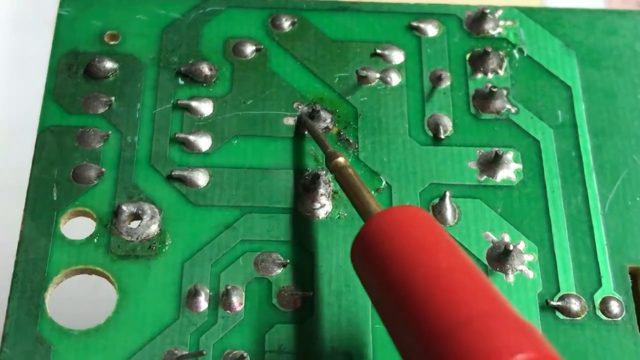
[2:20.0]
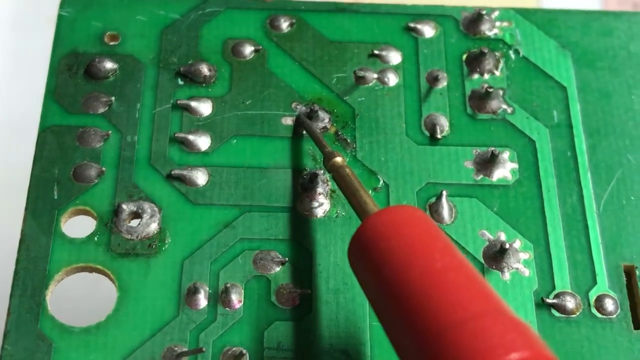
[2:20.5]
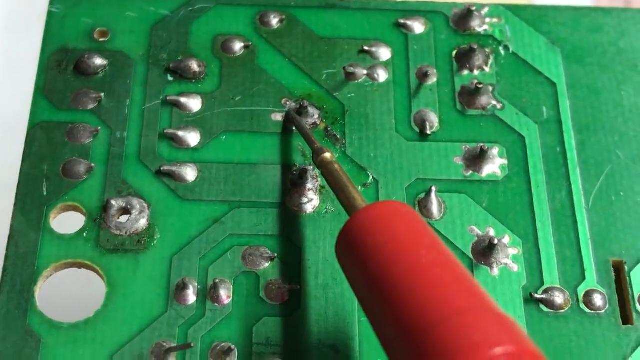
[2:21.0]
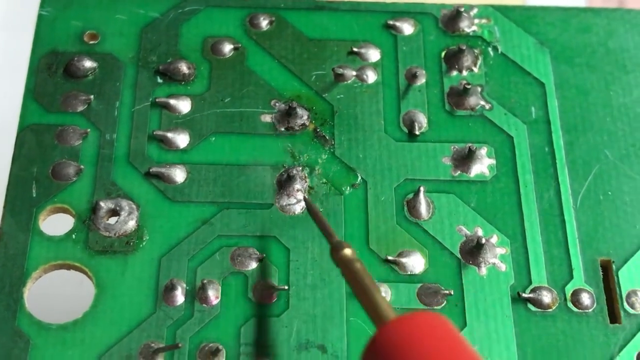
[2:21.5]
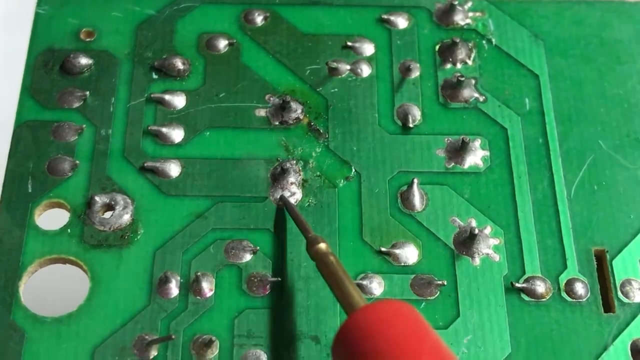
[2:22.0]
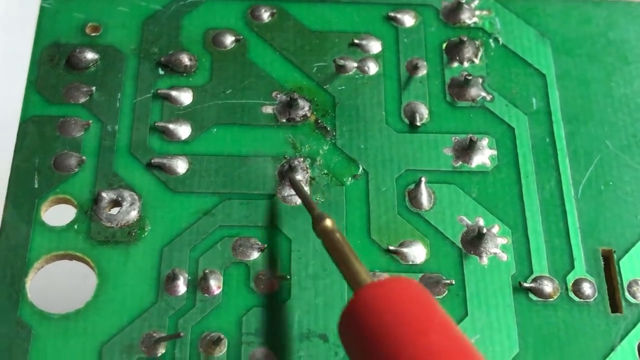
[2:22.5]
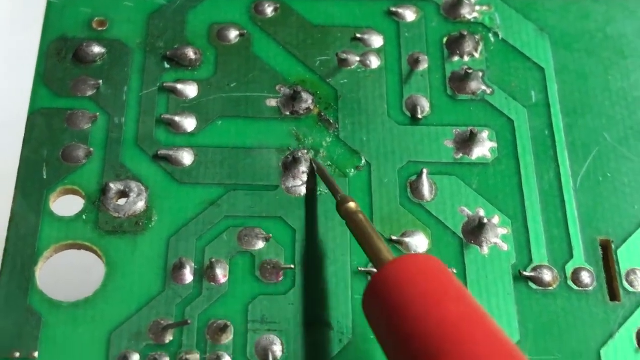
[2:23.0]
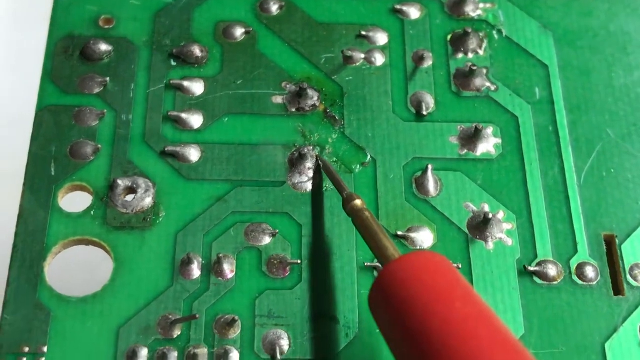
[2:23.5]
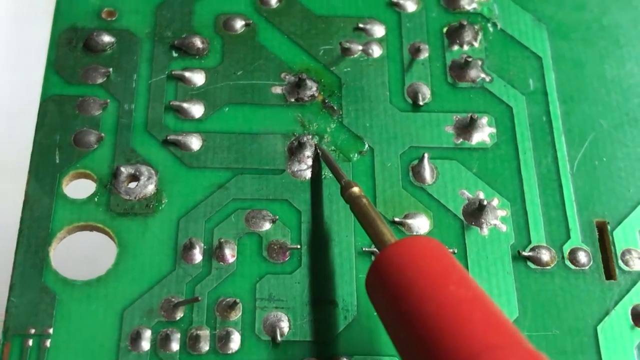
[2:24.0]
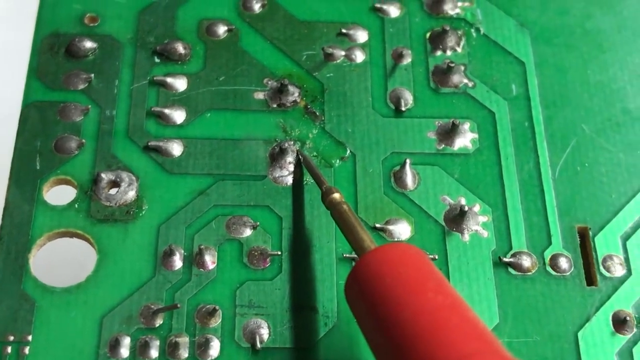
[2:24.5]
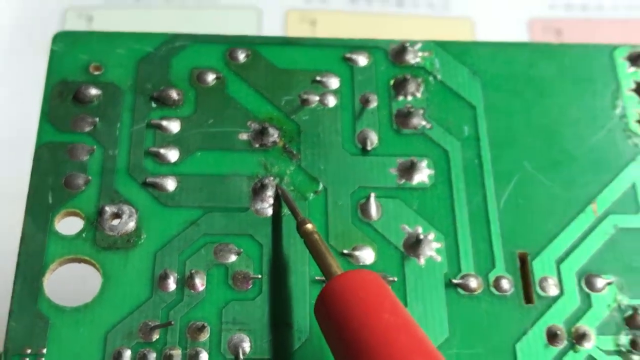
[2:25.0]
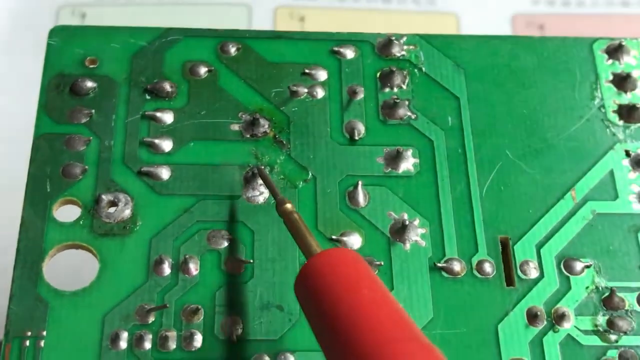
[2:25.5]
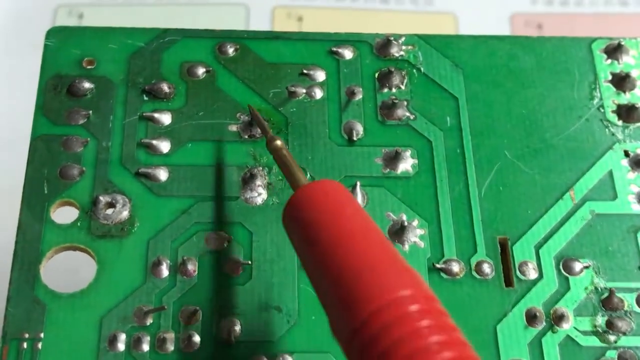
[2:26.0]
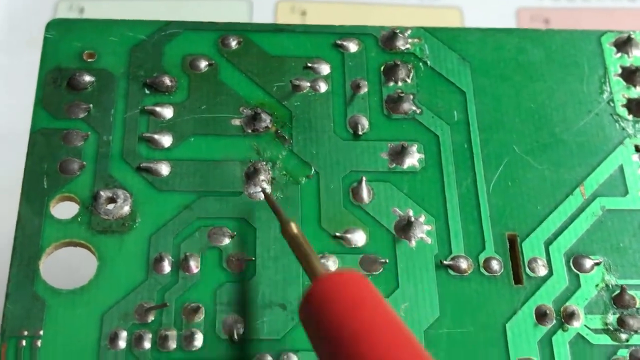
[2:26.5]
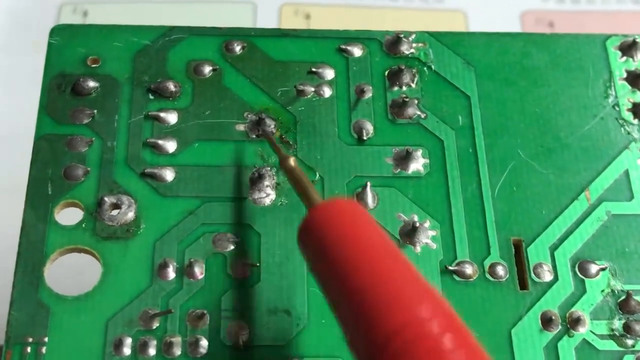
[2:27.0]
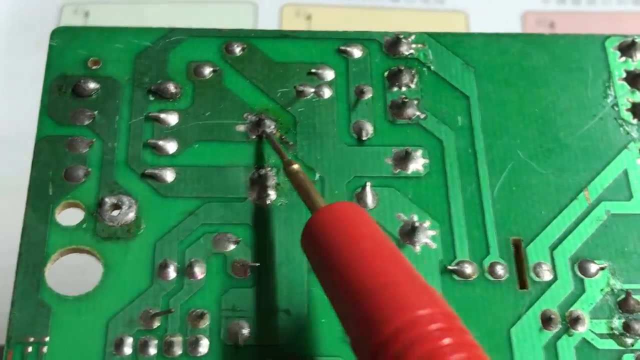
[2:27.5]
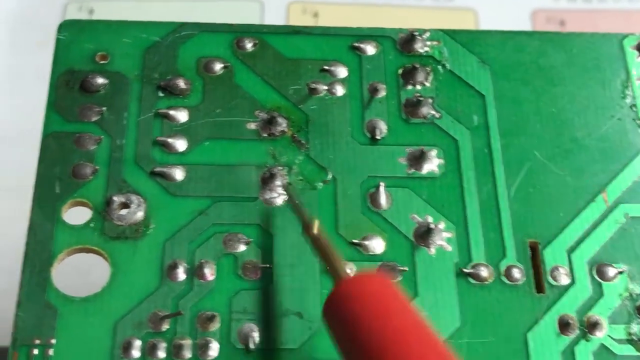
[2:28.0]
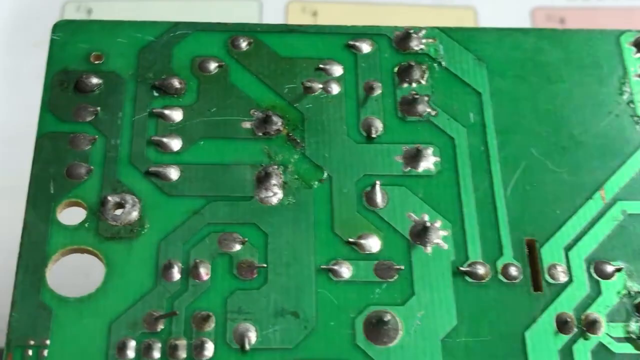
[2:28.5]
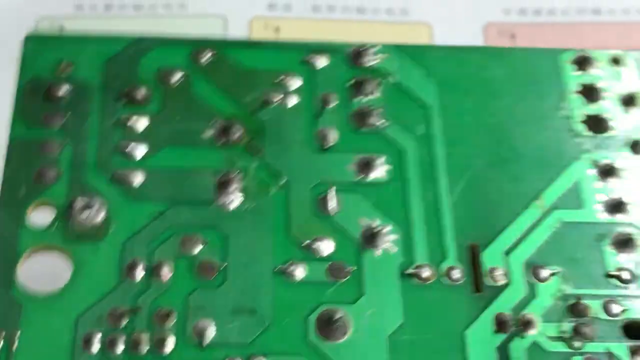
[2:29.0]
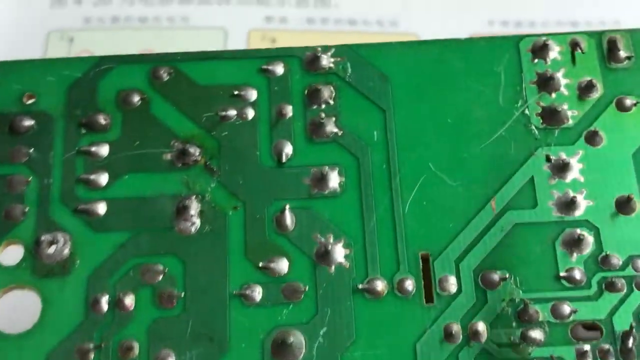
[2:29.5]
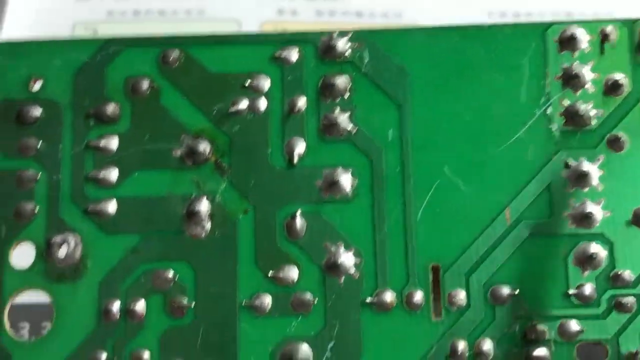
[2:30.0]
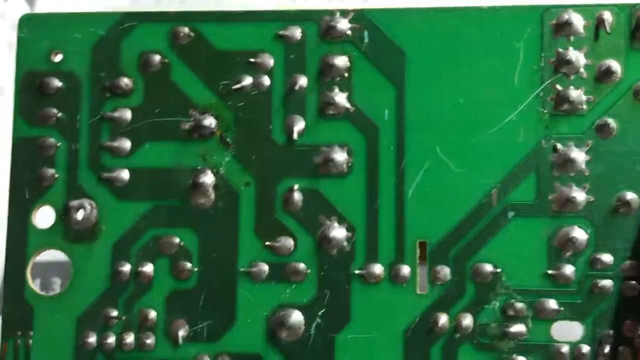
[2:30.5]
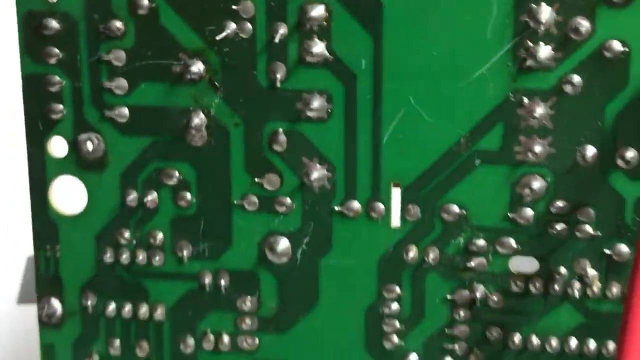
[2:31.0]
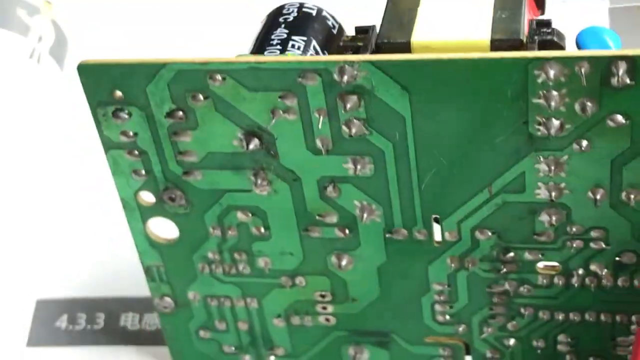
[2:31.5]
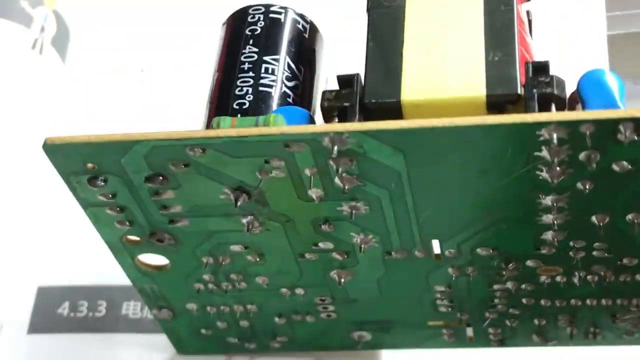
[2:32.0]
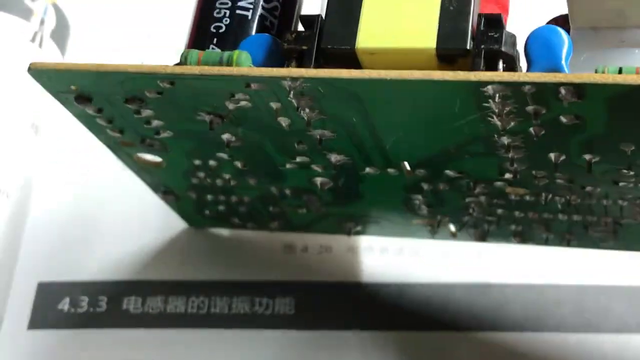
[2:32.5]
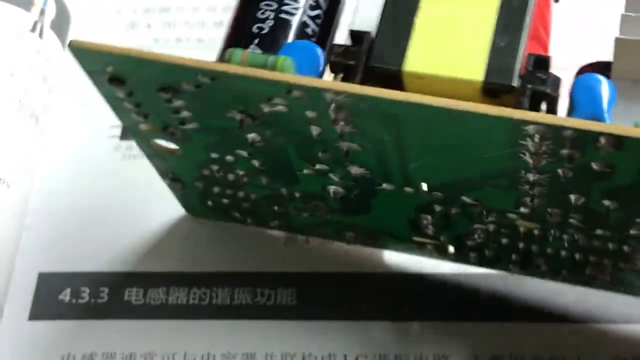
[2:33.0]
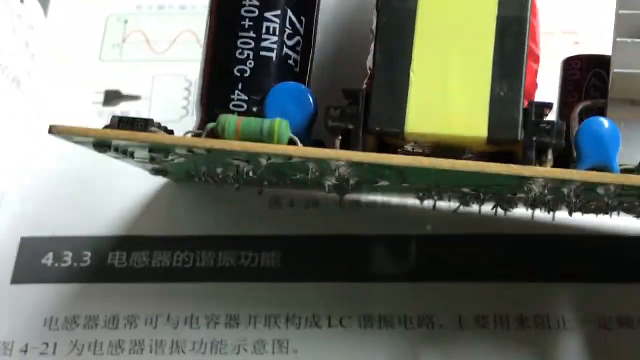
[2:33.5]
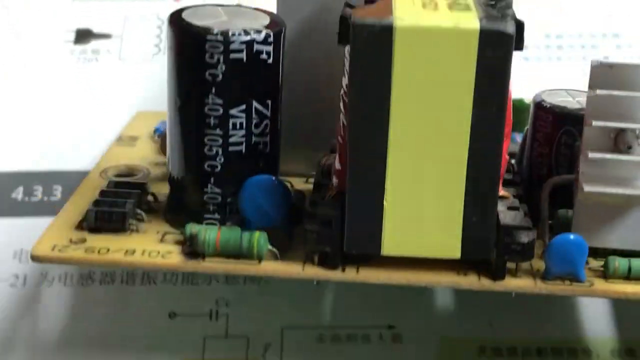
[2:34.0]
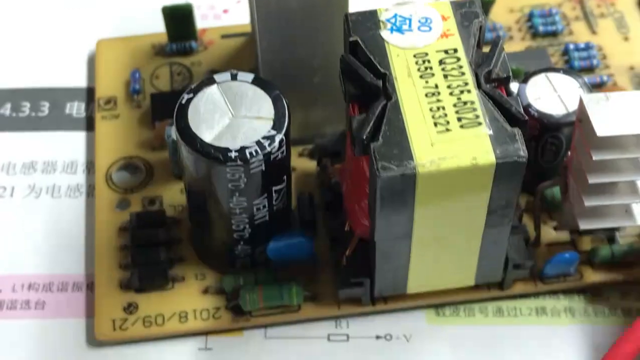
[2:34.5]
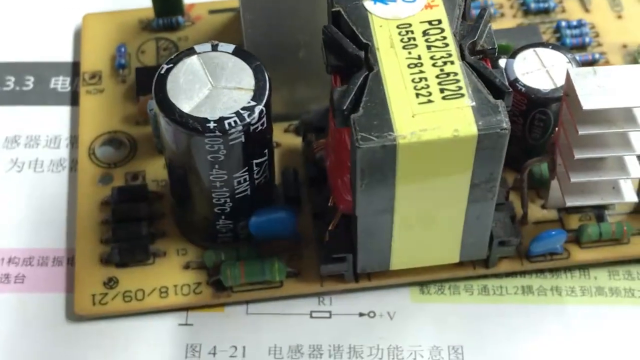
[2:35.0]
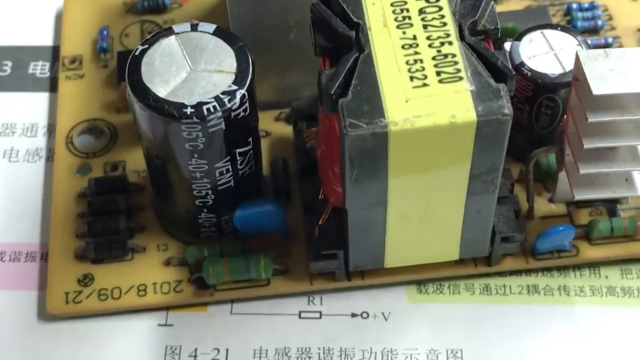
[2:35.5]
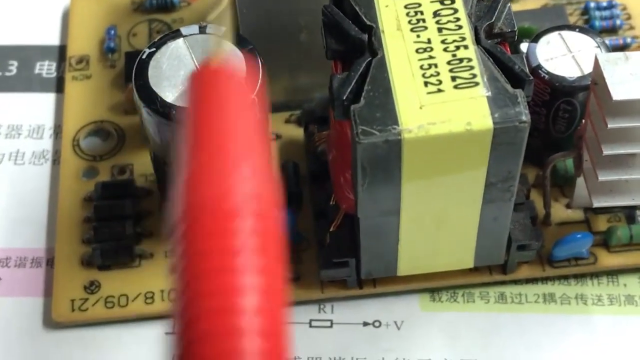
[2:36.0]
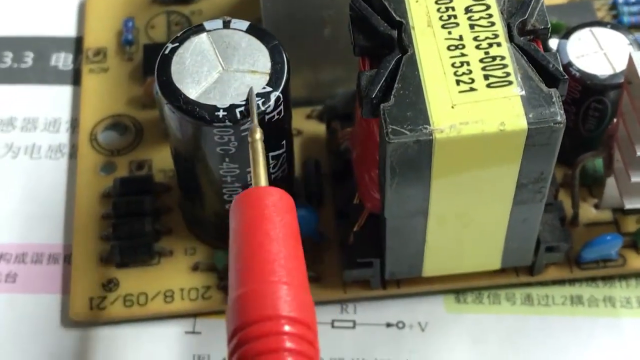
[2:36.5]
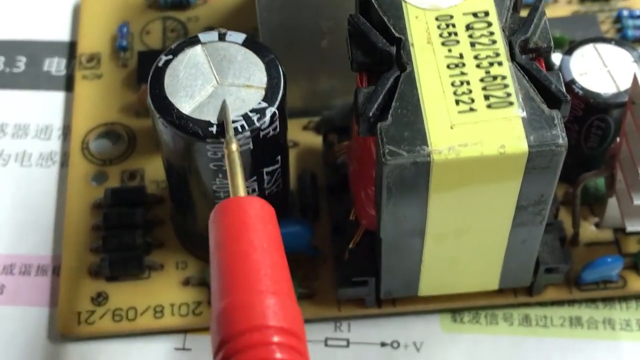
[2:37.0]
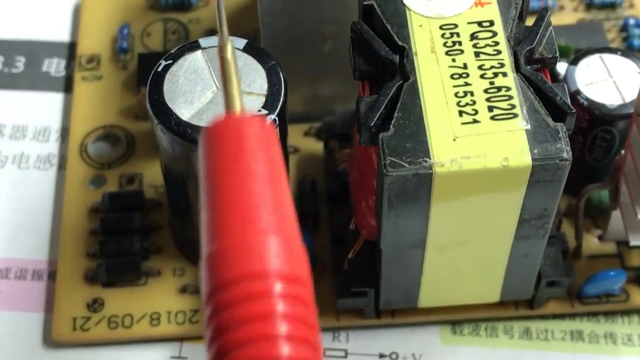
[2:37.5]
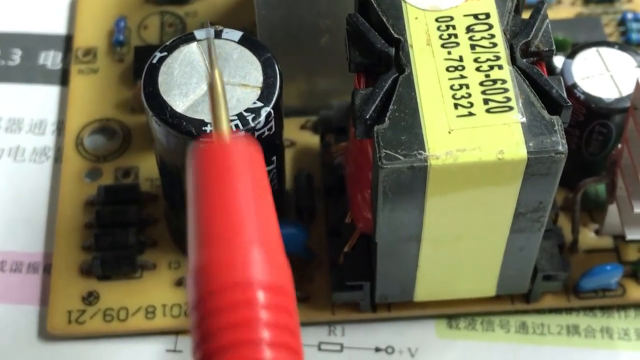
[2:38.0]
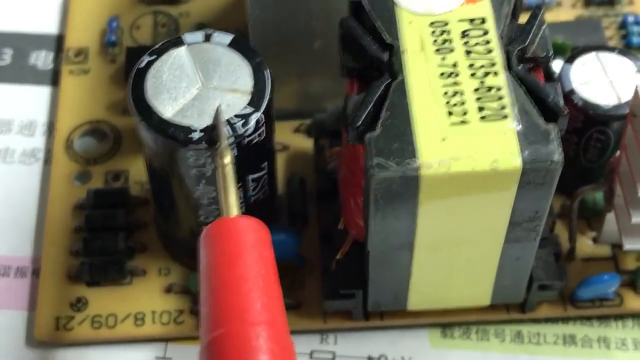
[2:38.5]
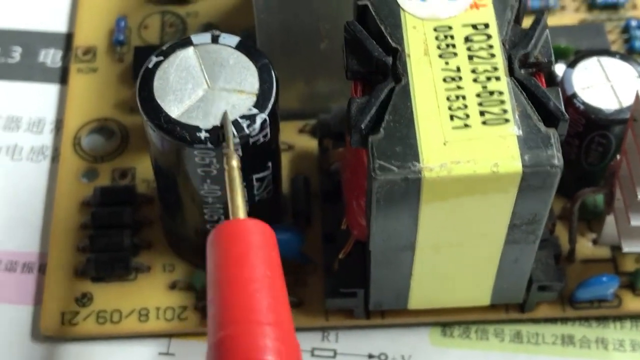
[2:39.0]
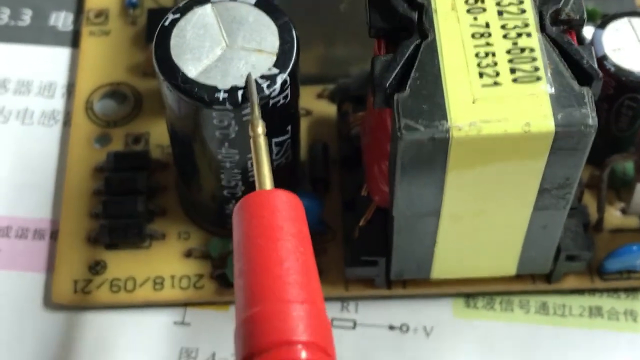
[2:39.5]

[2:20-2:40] A green circuit board has a bunch of geometric shapes on it in different shades of green from the rest of the board. Metal pieces of different shapes look like some sort of metal flux: those on the left look a bit more like teardrops, while some on the right are a bit more spiky. A couple of holes are on the bottom left of the board. A golden pointer with a red base is on the board, then is taken away, and the camera zooms out a little, showing that this was the bottom of the board. The board is flipped over to its top side, which is more yellow, with a couple of black batteries and a black thing in the center with a yellow label bearing a bunch of letters and numbers. The pointer points at one of the black batteries, and part of a sort of book is visible underneath the board.